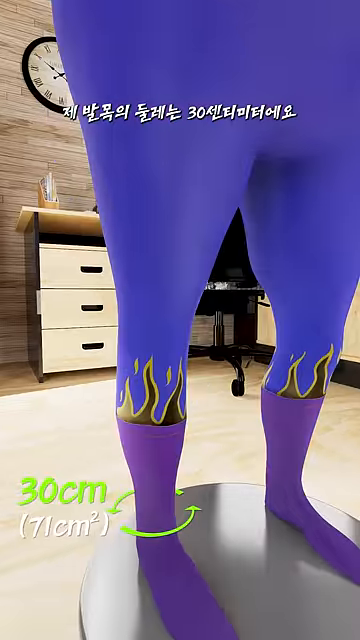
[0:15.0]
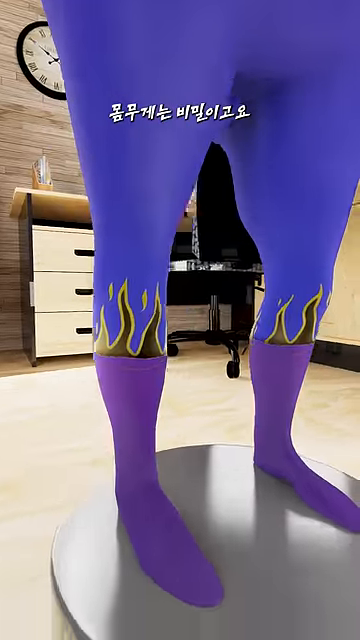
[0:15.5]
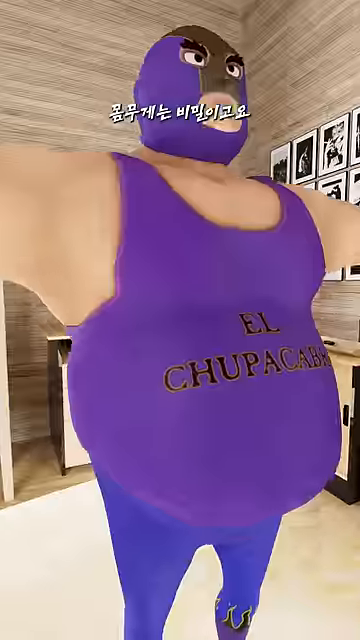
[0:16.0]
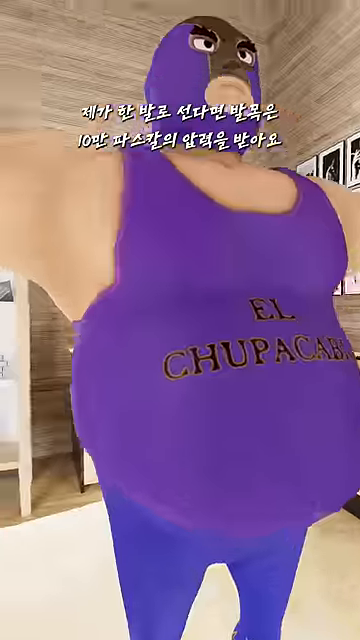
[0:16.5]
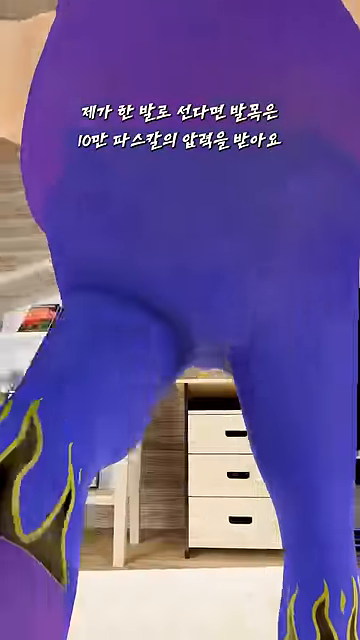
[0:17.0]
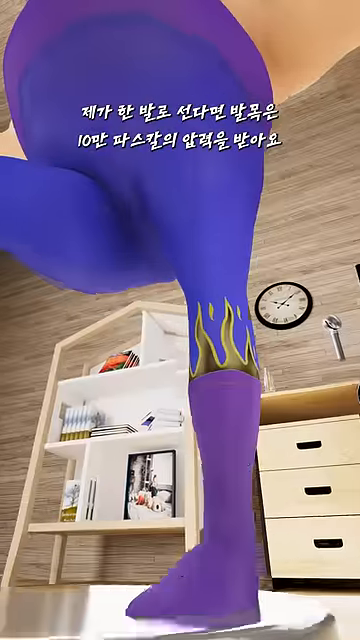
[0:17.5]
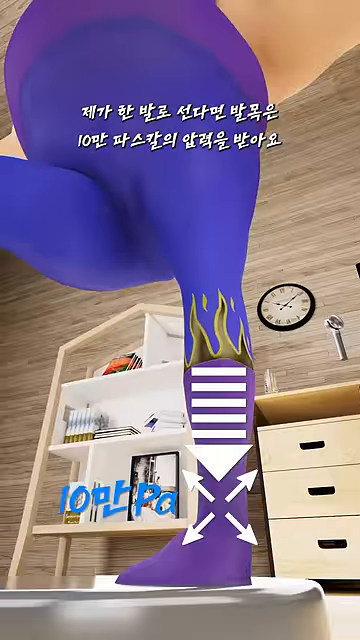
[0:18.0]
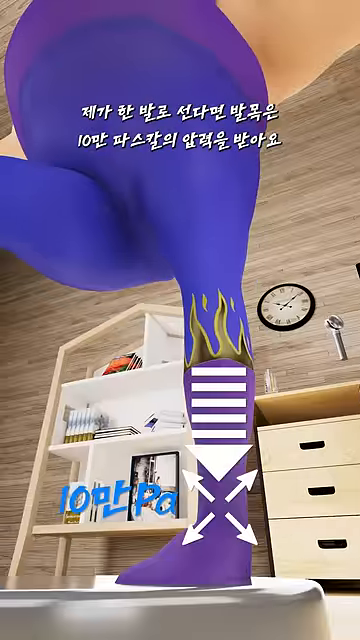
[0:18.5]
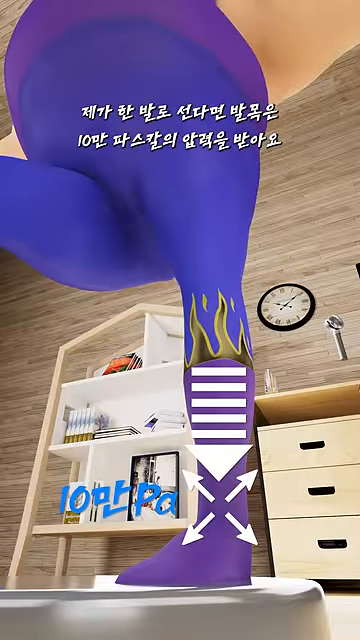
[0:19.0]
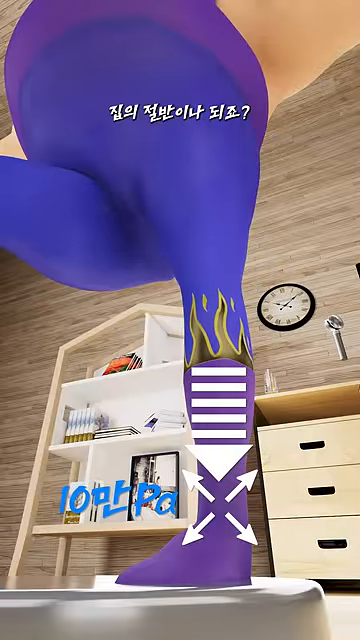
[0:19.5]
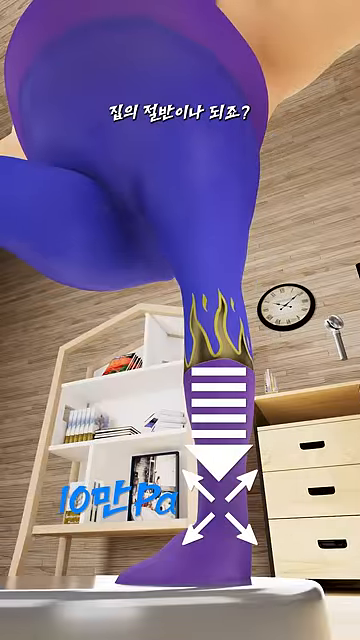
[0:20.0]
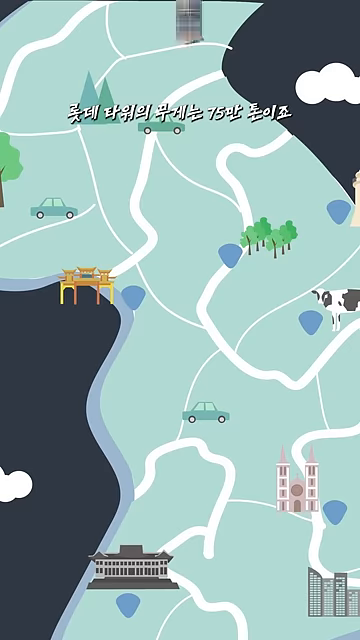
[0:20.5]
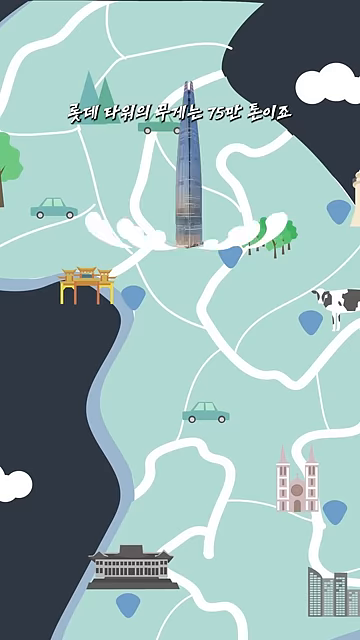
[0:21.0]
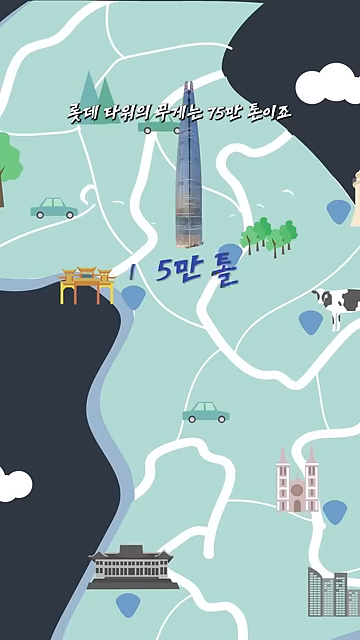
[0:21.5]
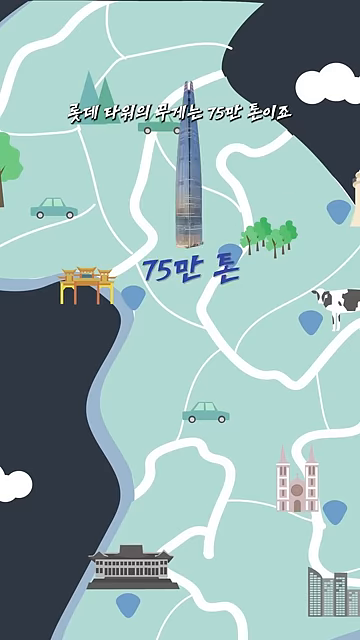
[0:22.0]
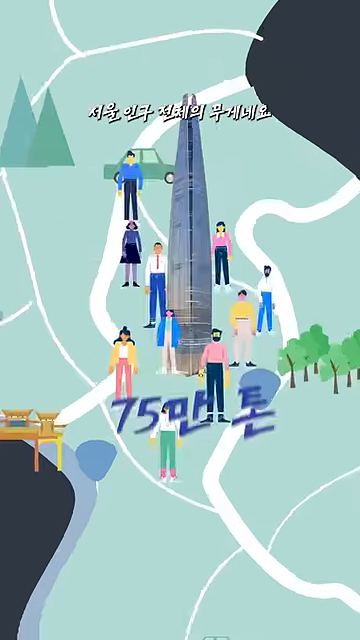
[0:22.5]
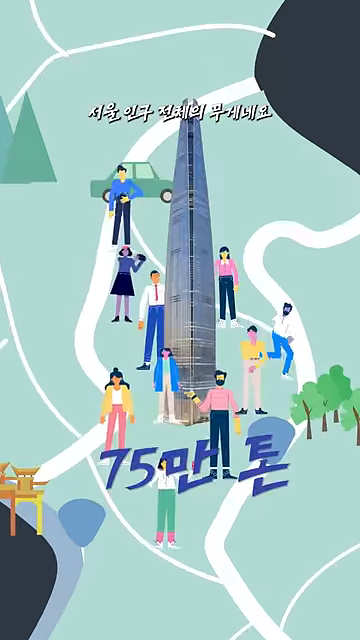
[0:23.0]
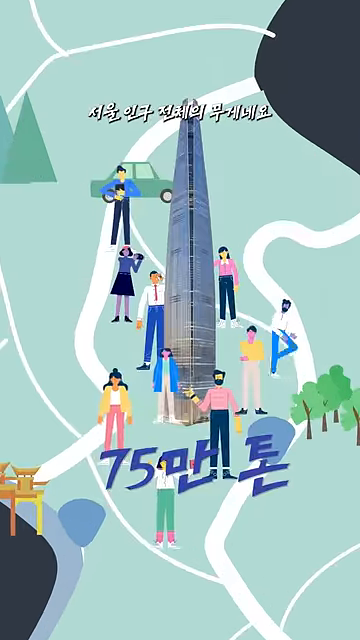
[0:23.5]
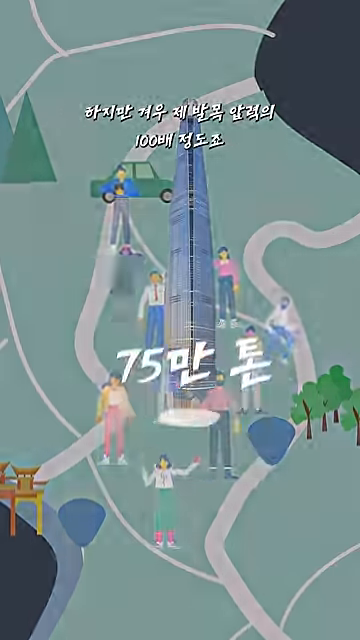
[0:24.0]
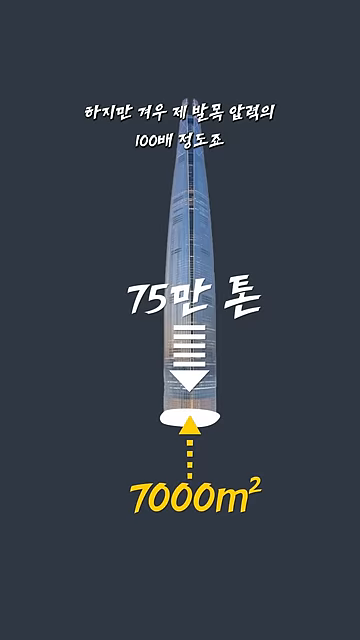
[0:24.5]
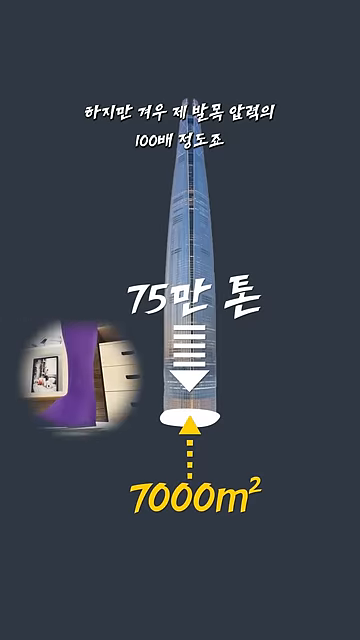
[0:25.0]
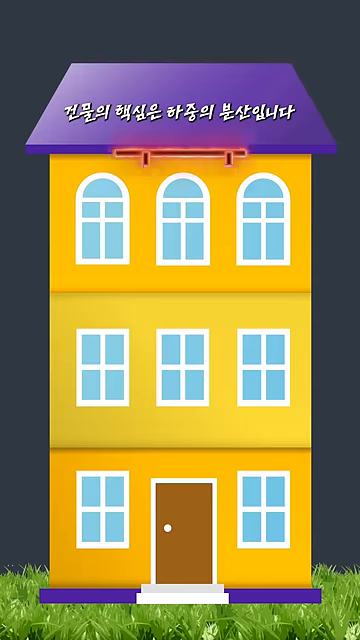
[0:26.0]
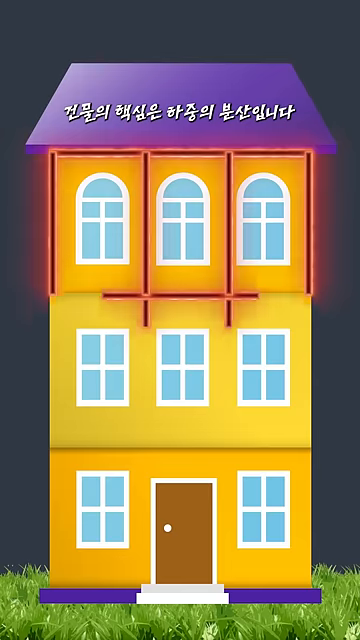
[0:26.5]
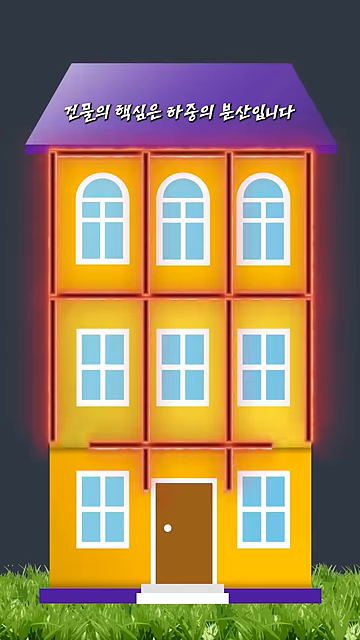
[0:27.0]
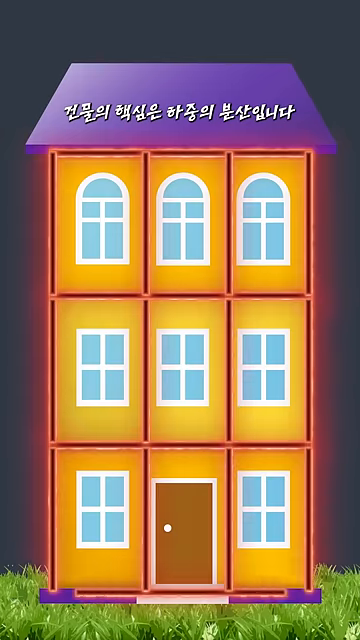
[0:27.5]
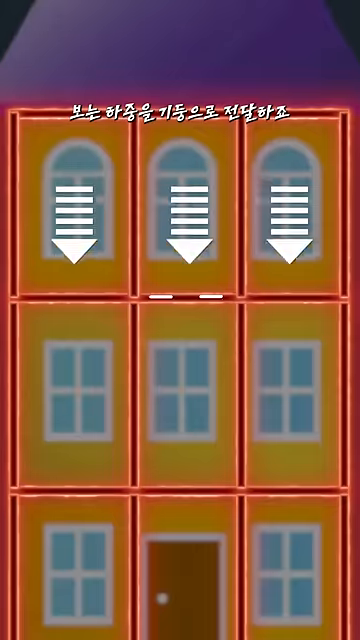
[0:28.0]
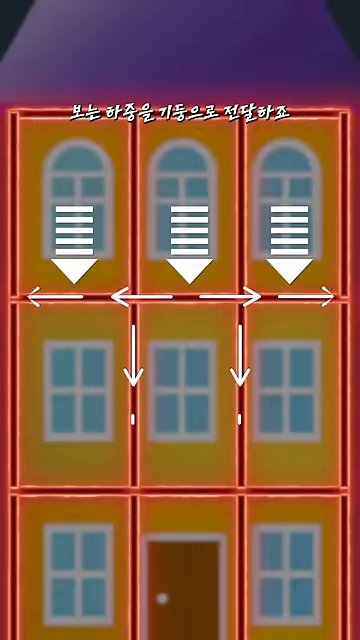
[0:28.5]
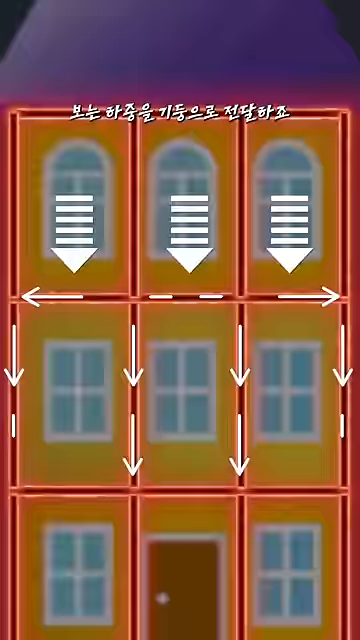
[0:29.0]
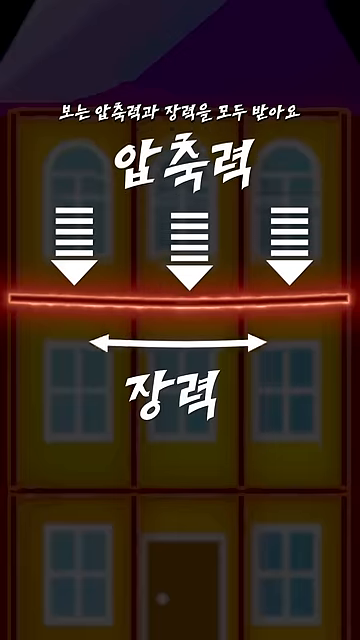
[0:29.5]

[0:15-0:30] The purple wrestling figure suddenly does a pirouette and stands on a single foot while the video shows how much pressure he is exerting. It switches to a cartoon-like map where a skyscraper-like building plops down near the center, and many tiny people appear around it going about daily activities such as walking, running and talking on a call. The view zooms in to show how much pressure the building would seemingly exert on the land, with figures like 750 flashing about. It then switches to a different building, a yellow building with a purple roof, showing how pressure is exerted and spread evenly across each sector and what supports are placed deep underneath the building to keep it from falling, and the building is shown being expanded with more construction.